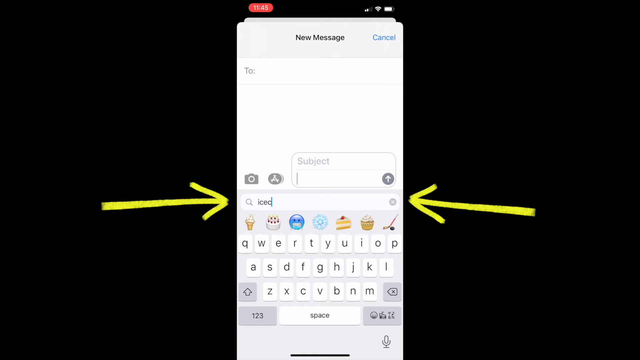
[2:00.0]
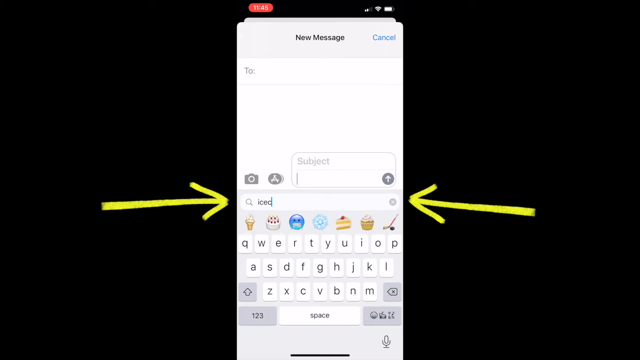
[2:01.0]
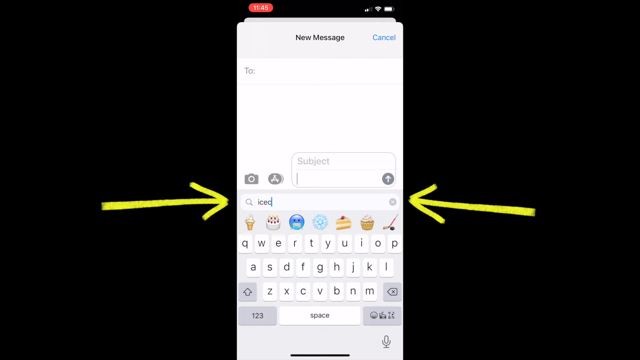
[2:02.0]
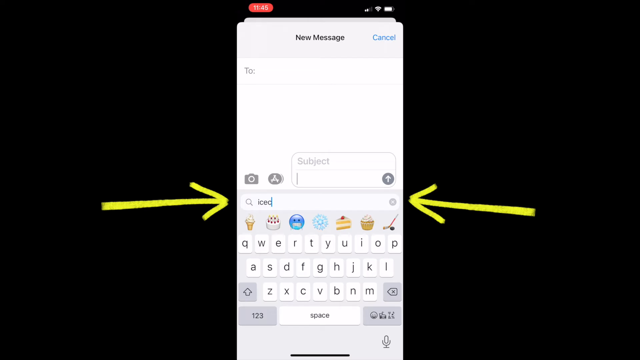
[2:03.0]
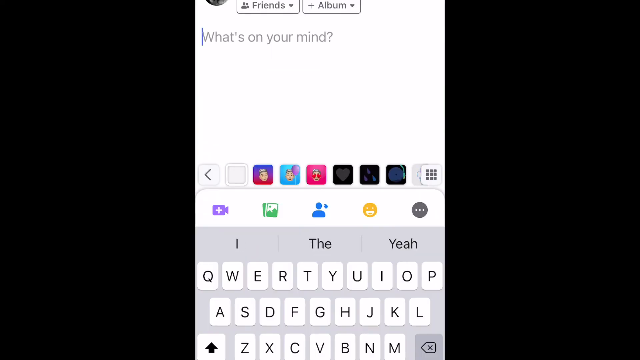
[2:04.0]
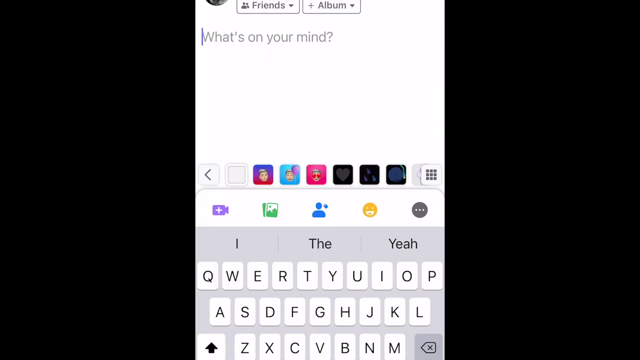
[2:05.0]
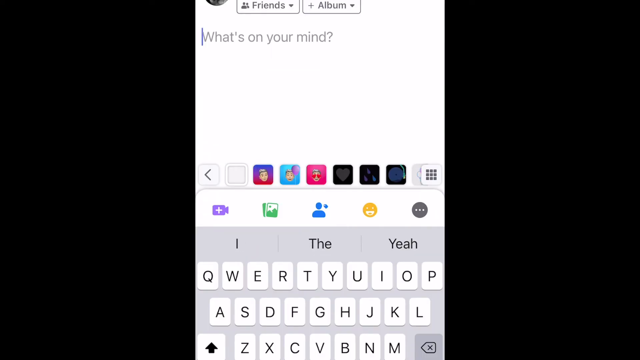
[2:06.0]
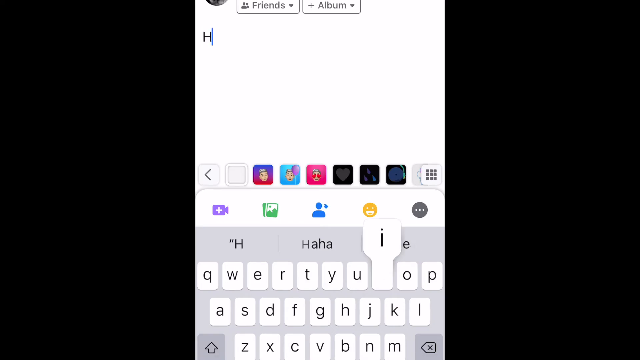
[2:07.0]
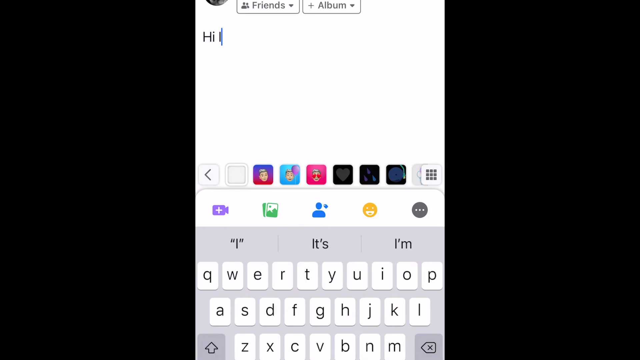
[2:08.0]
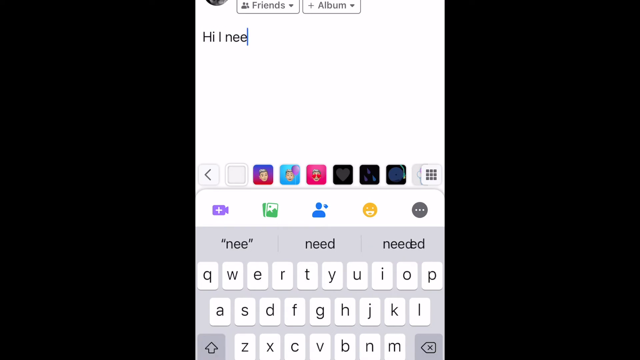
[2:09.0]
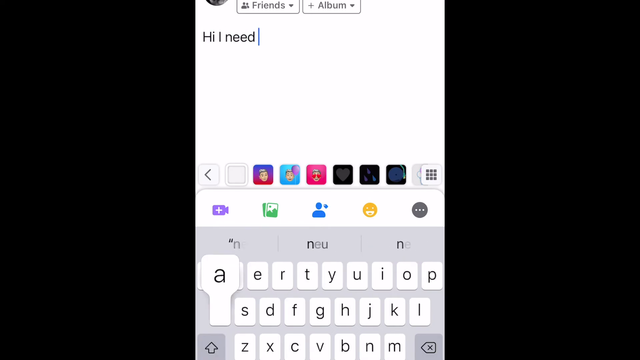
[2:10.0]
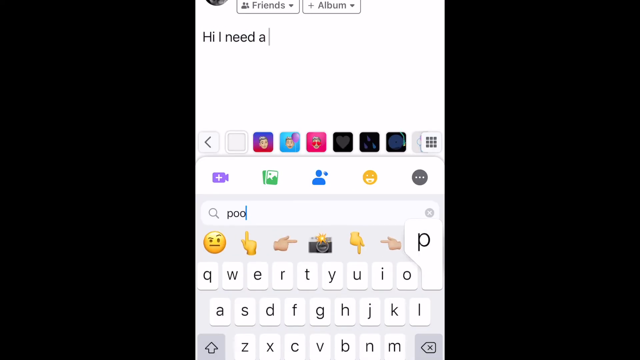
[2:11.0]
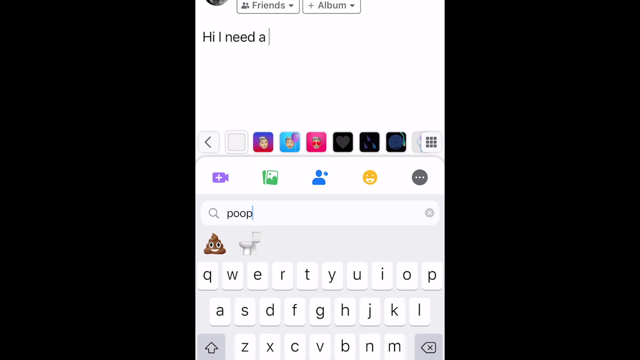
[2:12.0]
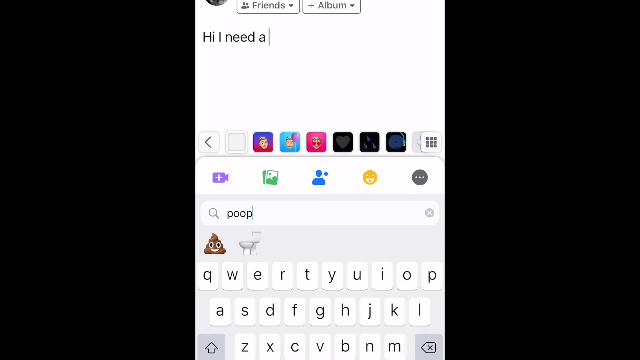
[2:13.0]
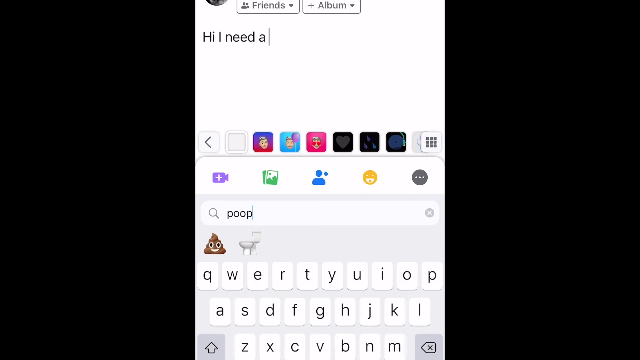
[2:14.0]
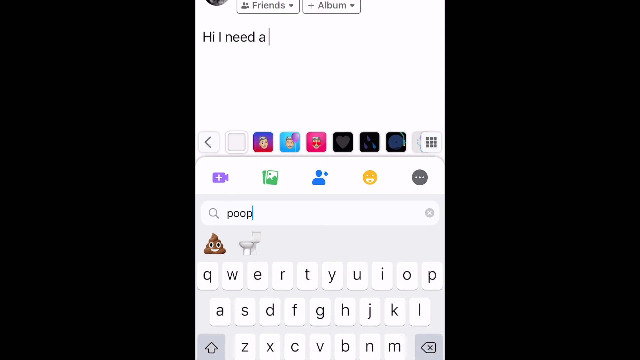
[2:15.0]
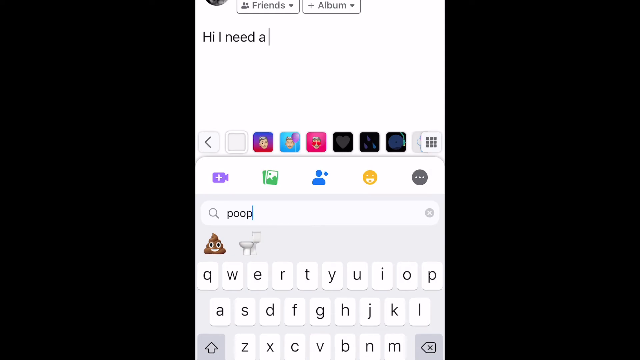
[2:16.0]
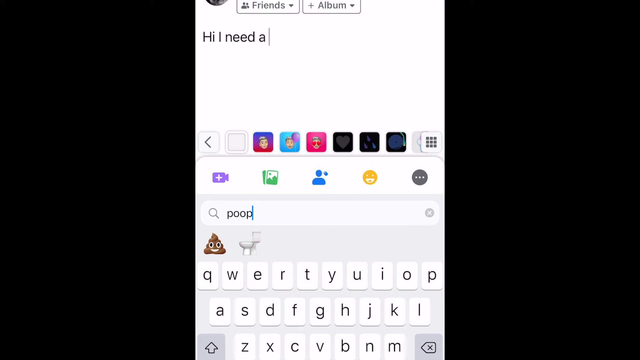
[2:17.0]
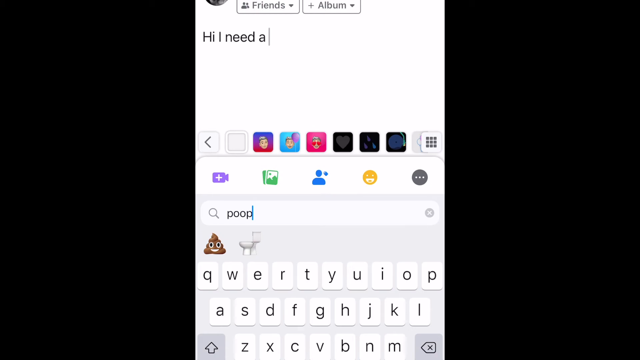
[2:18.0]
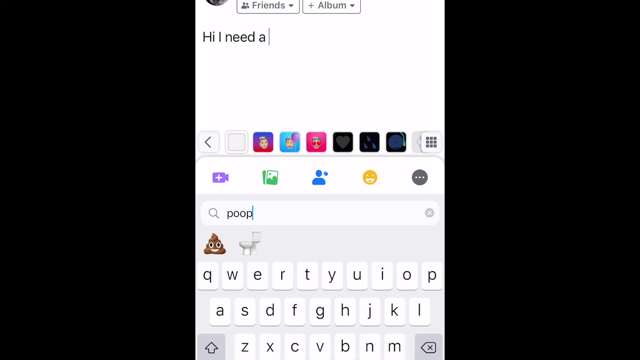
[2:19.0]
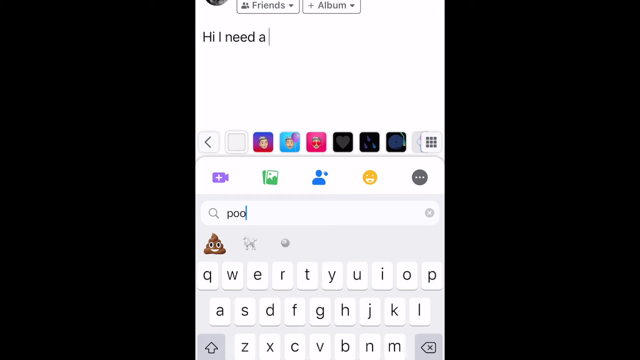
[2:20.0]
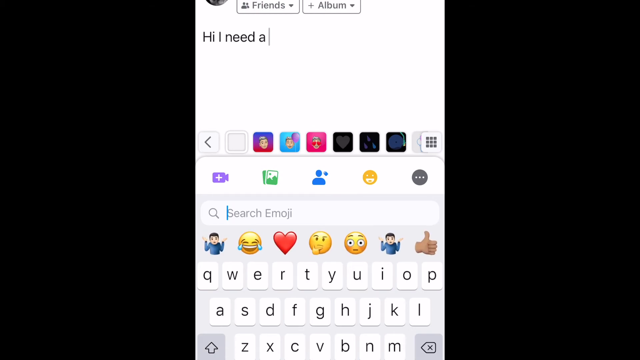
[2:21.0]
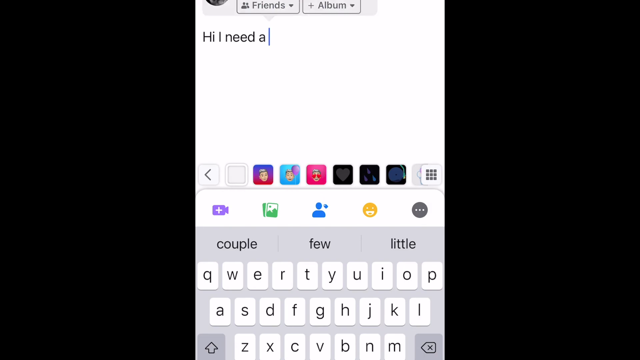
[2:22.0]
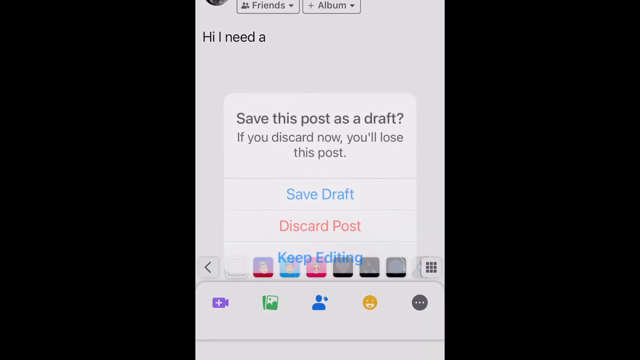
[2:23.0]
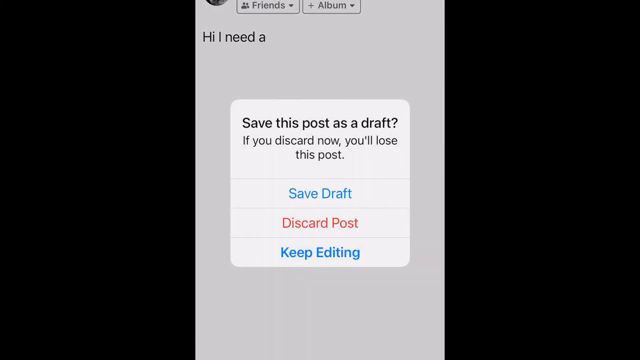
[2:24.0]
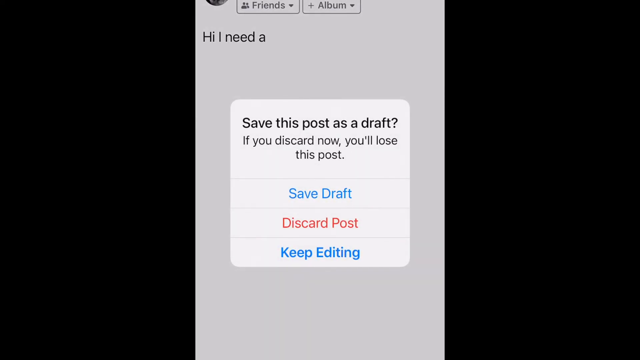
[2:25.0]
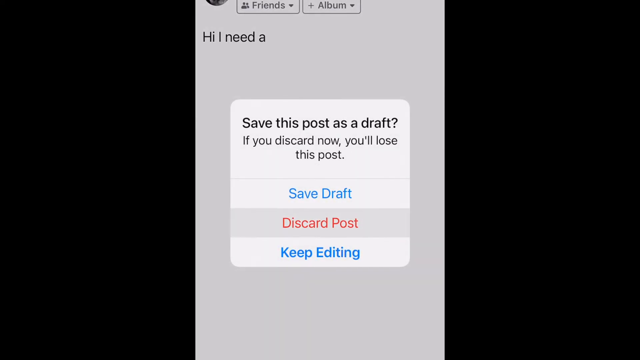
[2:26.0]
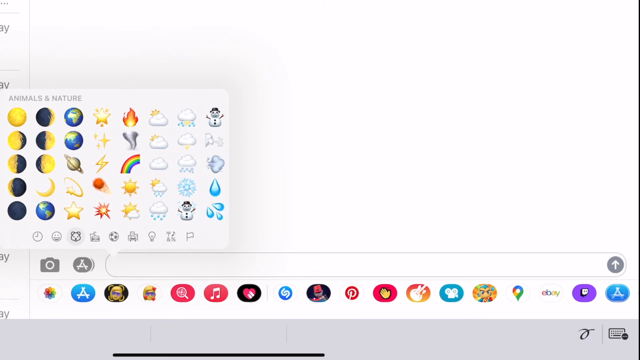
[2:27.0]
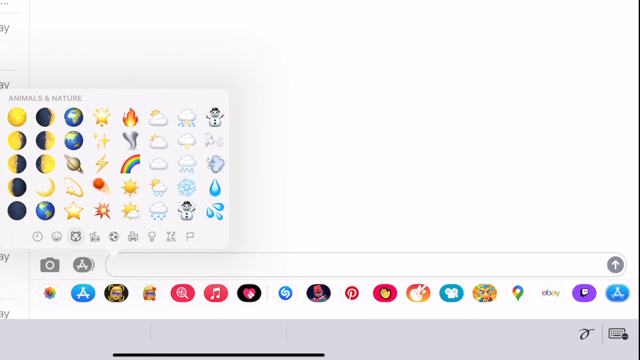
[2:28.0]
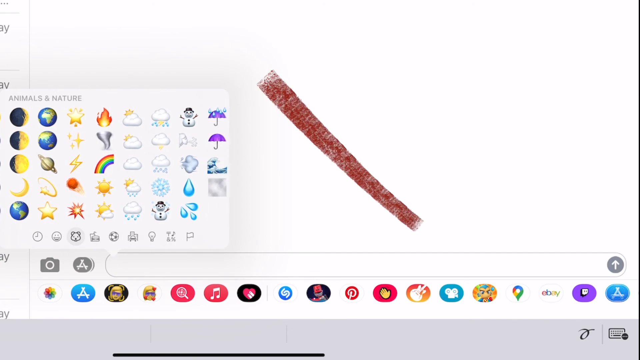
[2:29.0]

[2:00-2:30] The same phone messages screen is shown, with two yellow arrows pointing to the search bar for searching emojis. "Ice cream" is typed into the search, and emojis such as ice cream and cake pop up. The screen then zooms in to what looks like a post being made. It says "hi, I need," and the emoji box says "poop" and shows the poop emoji. A window then pops up that says "save this post as a draft" and "if you discard now you lose this post," with the options "Save draft," "discard post" and "keep editing." The window is closed, and the large screen returns, showing the emoji search bar with no word in it and emojis that look like they have to do with space or weather: a sun, a planet, a rainbow, clouds, raindrops and snowmen. Then a big red X appears on the screen.